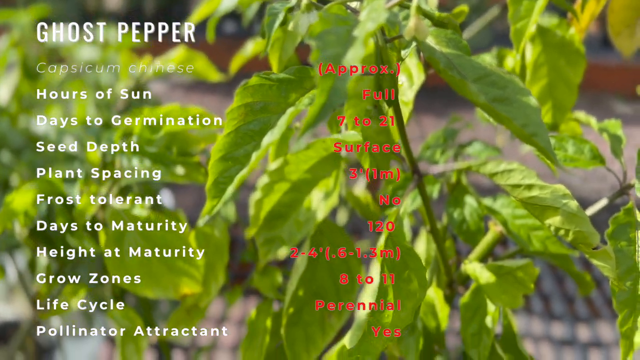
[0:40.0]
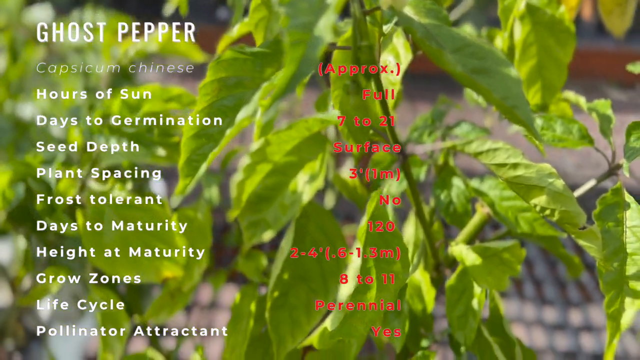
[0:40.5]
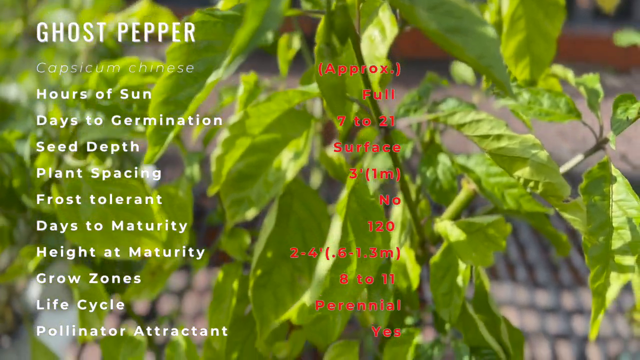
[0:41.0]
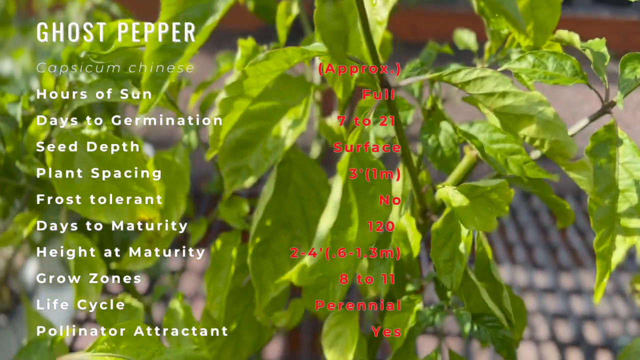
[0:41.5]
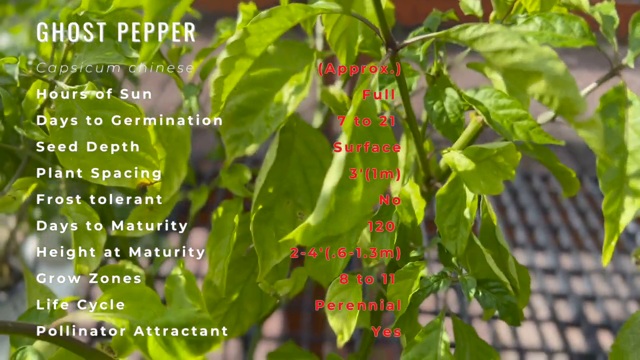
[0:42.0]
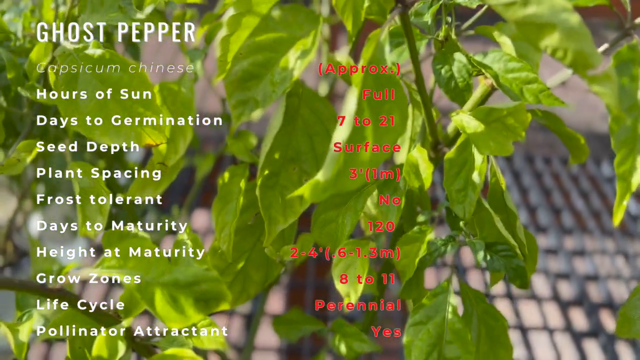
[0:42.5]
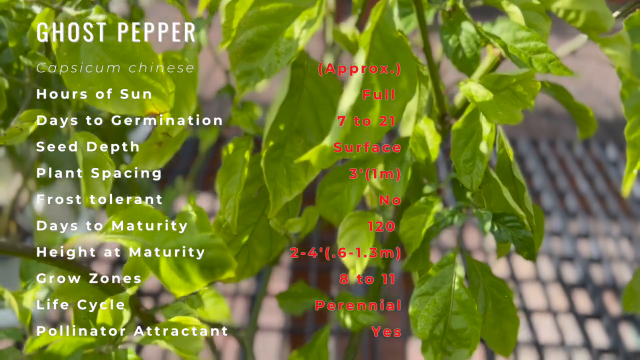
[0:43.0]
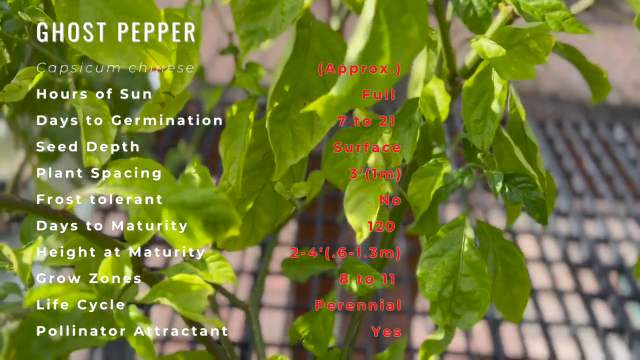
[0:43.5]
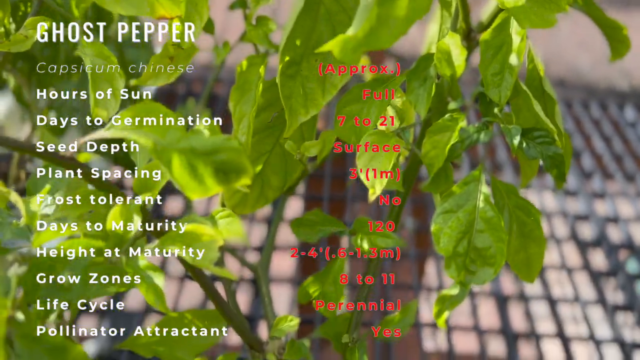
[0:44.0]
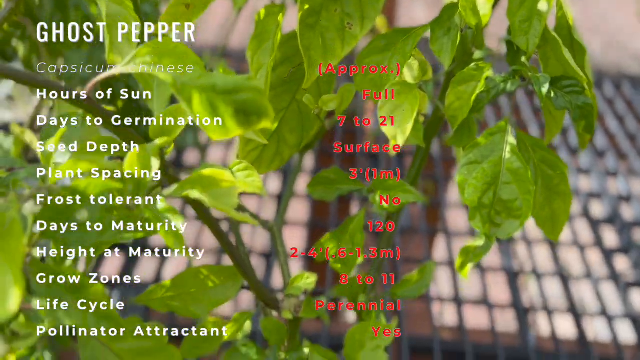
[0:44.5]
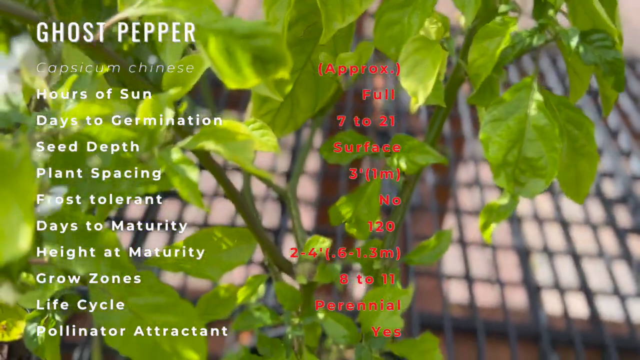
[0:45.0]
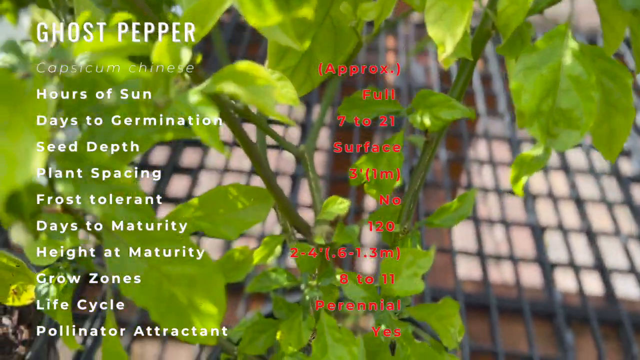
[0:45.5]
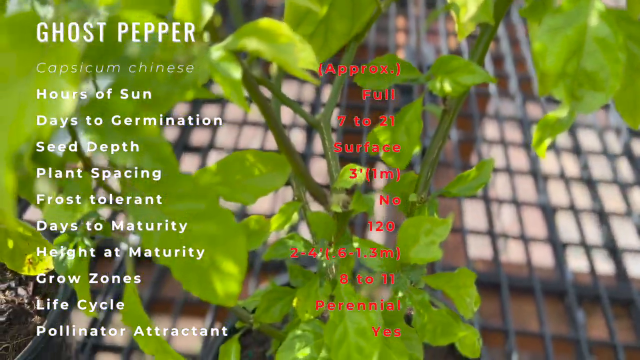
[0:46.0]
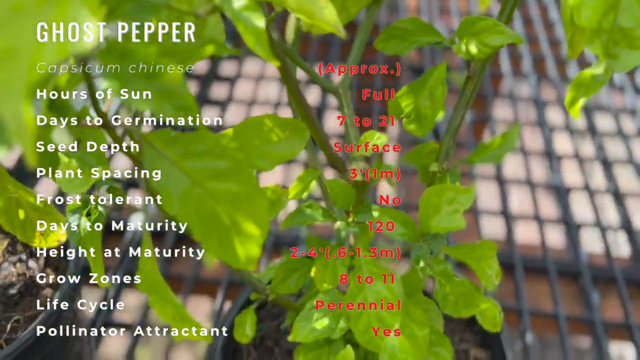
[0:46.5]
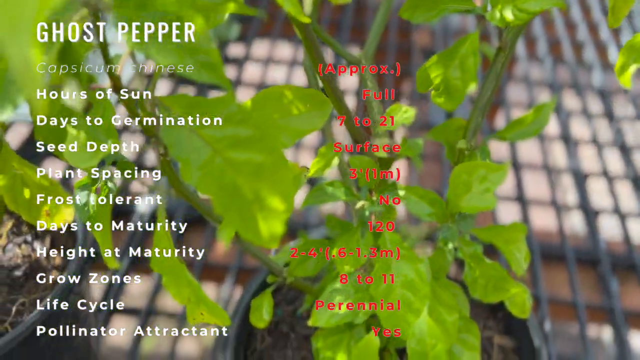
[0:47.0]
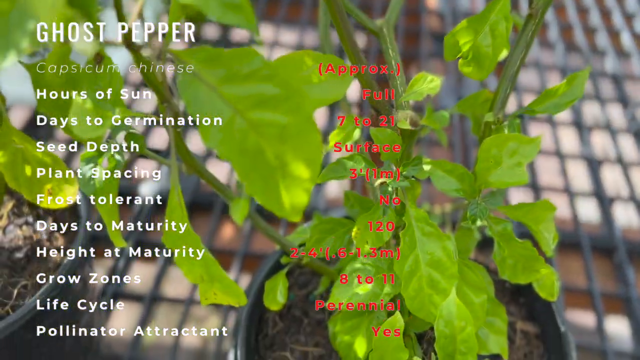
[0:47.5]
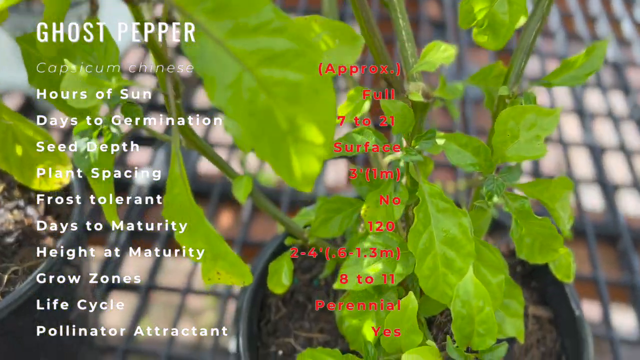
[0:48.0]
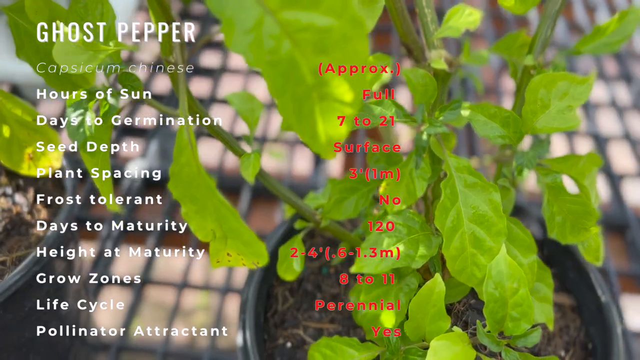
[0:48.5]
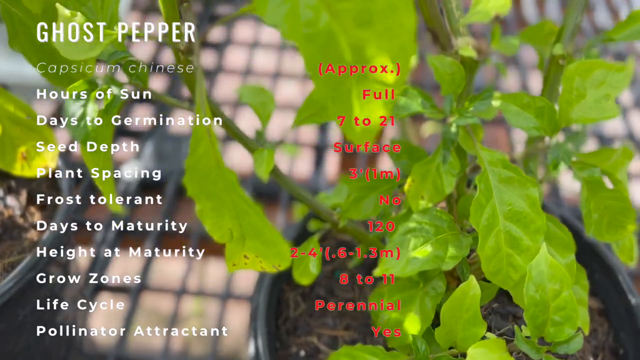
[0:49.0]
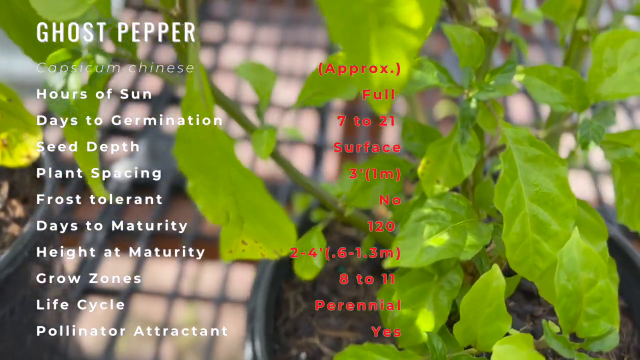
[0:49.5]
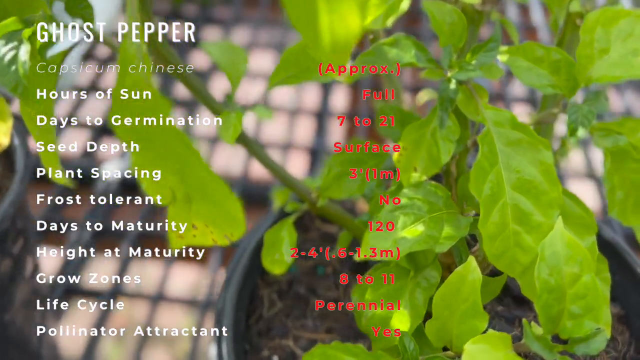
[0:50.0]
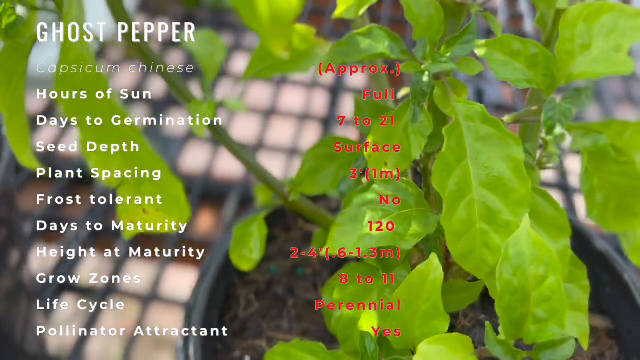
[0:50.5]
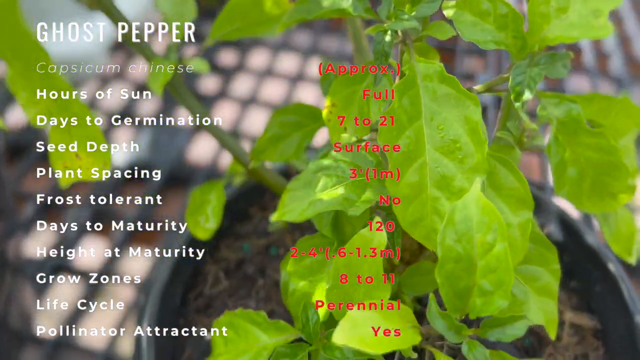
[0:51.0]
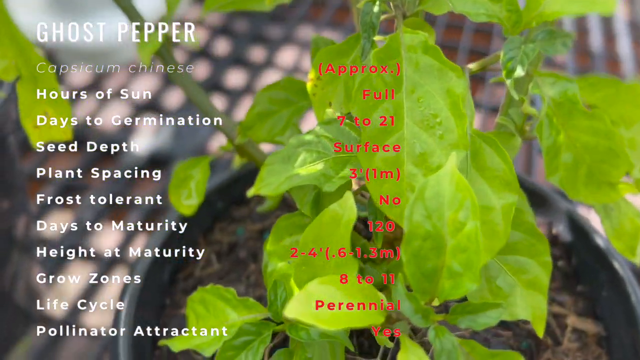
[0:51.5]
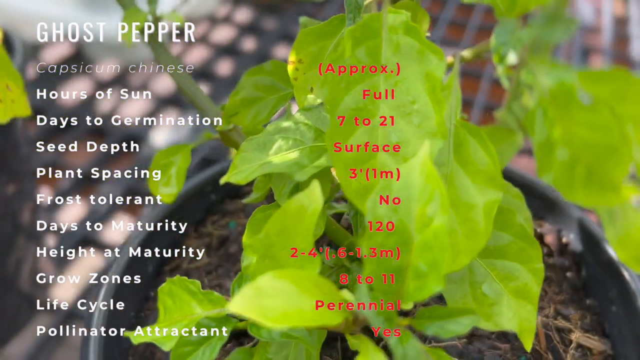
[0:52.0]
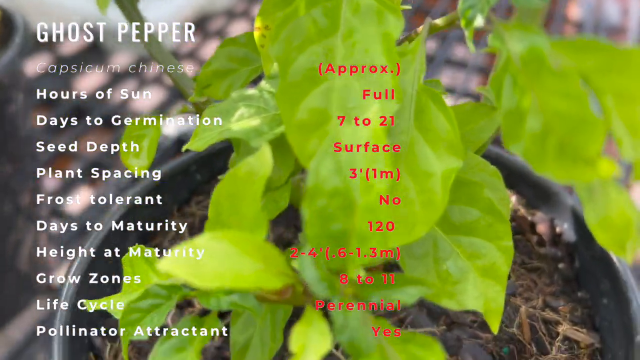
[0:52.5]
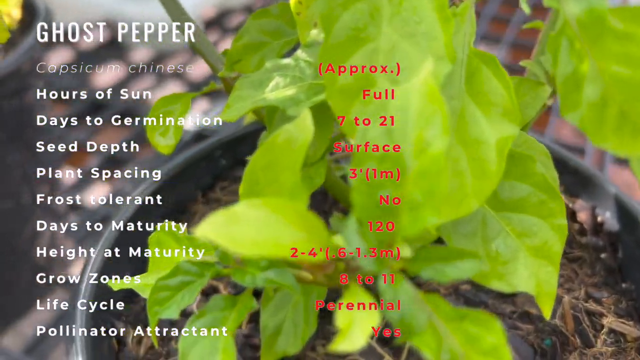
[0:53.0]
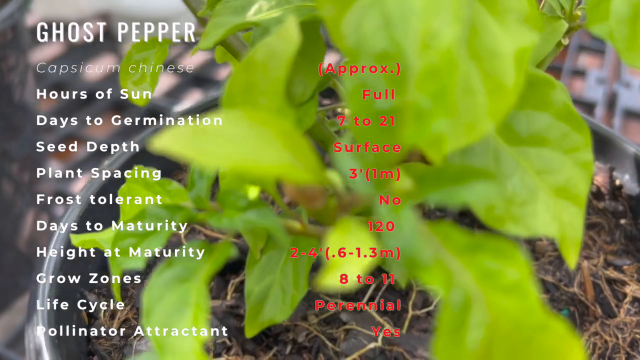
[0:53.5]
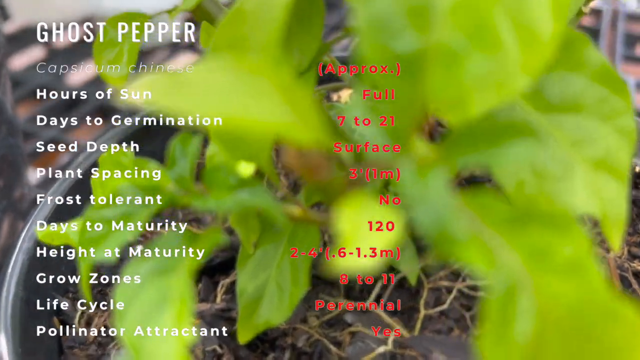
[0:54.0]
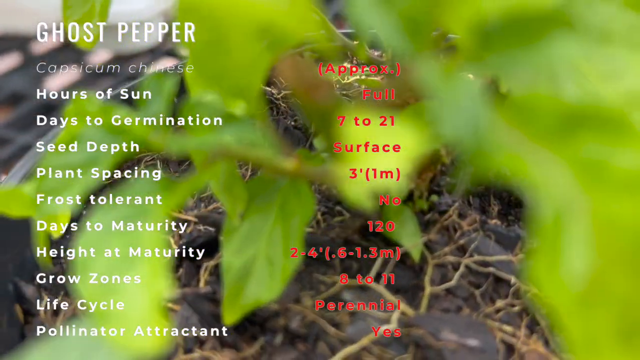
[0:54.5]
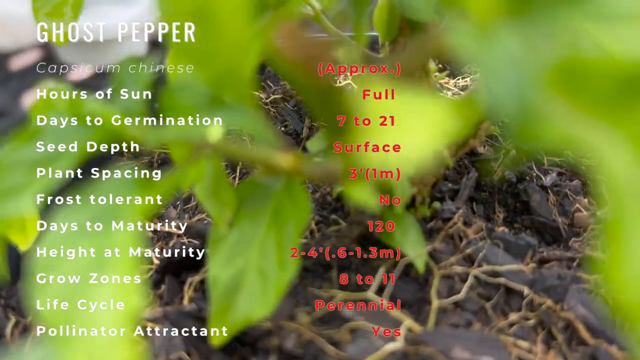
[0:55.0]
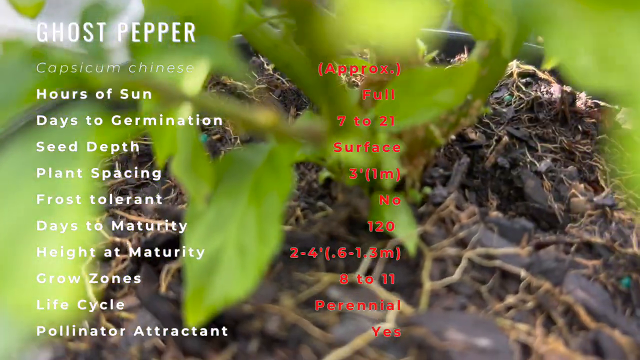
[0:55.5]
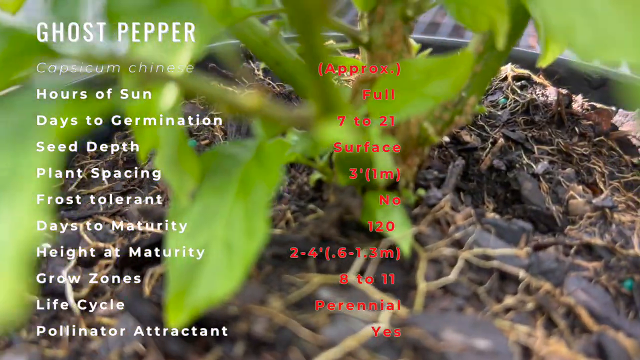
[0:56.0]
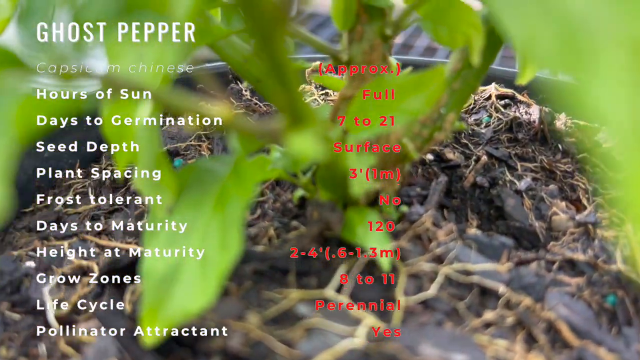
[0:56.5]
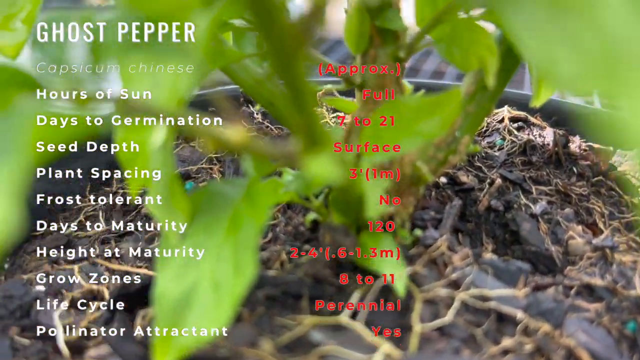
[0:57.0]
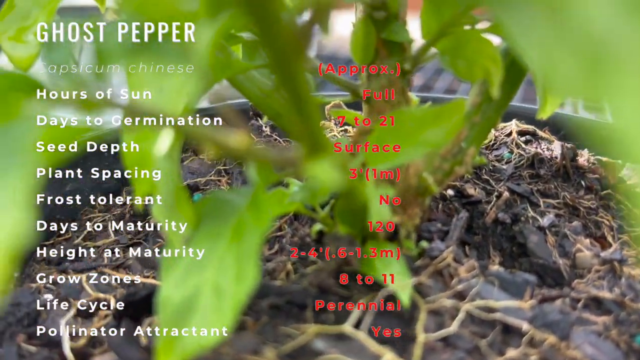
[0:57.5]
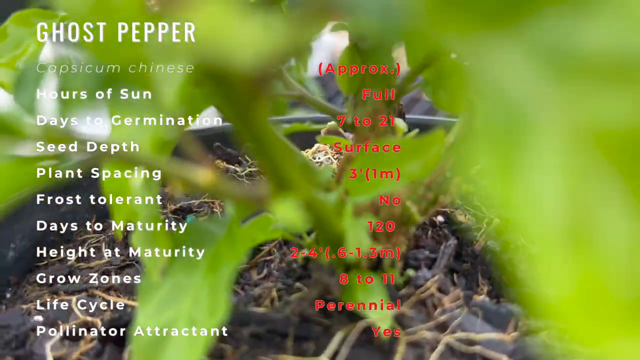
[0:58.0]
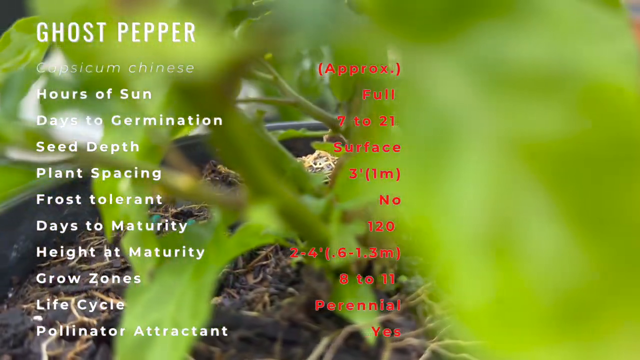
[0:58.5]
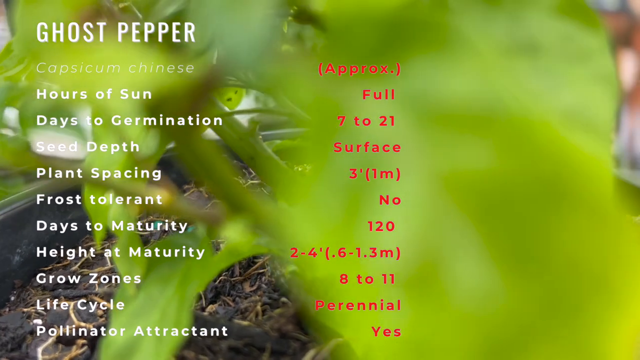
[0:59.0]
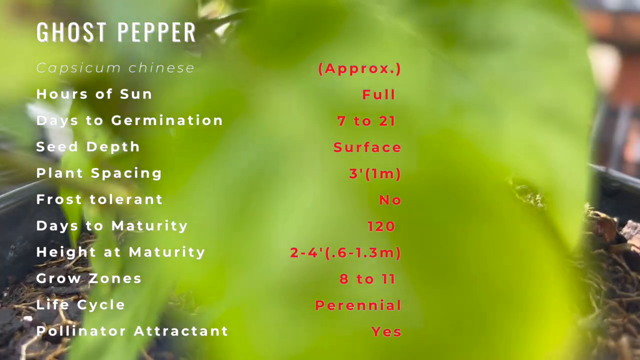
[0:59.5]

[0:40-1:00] A plant is in the background, and in the foreground are two columns of text about the ghost pepper plant and what it requires: white font on the left and red font on the right. The white column lists hours of sun, days to germinate, seed depth, planting spacing, frost tolerant, days to maturity, height at maturity, grow zones, life cycle, and pollinator attractor or attractant. The red column gives the corresponding information for each category, such as full hours of sun, about 7 to 21 days to germinate, and a seed depth on the surface.